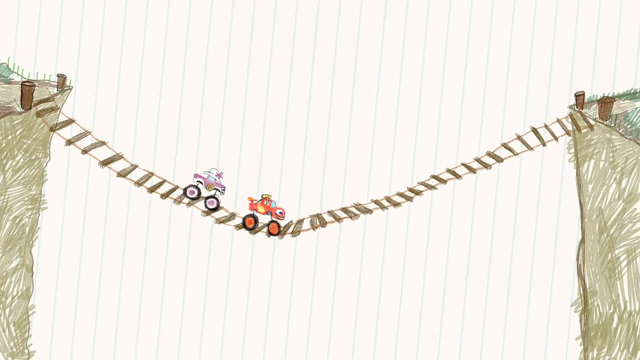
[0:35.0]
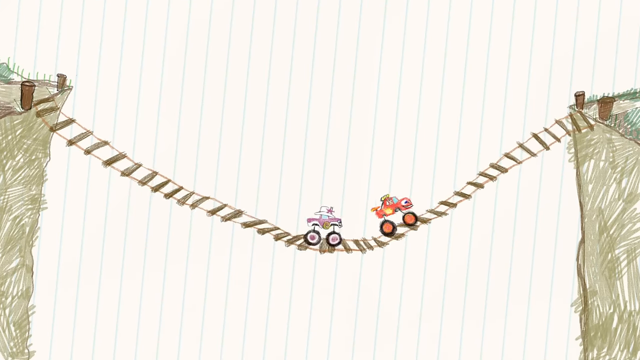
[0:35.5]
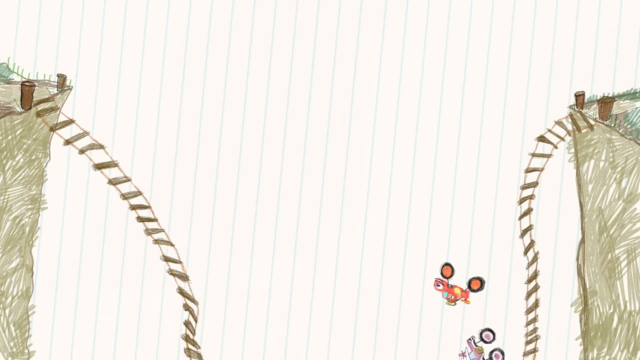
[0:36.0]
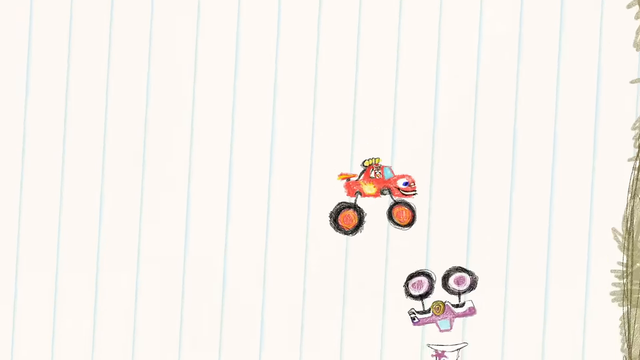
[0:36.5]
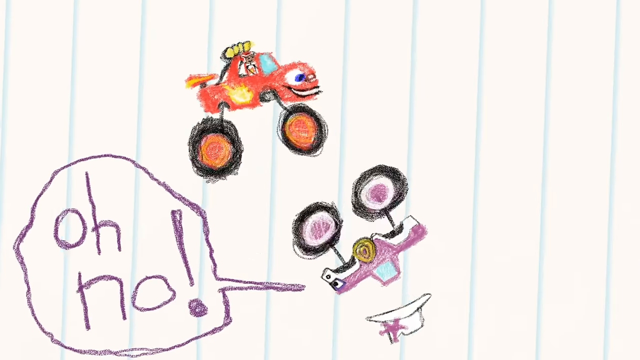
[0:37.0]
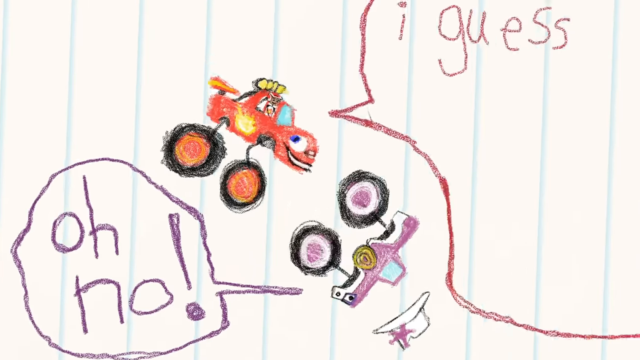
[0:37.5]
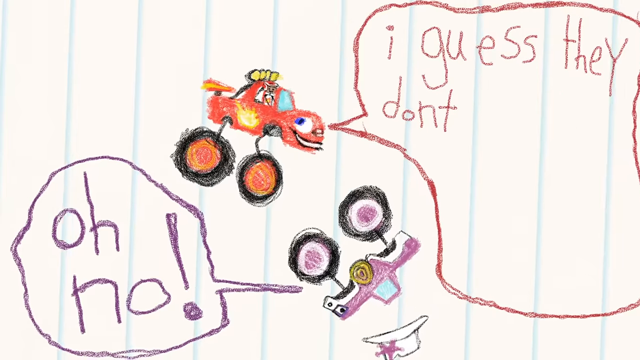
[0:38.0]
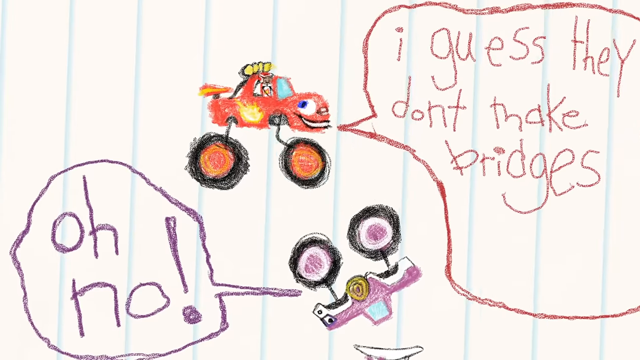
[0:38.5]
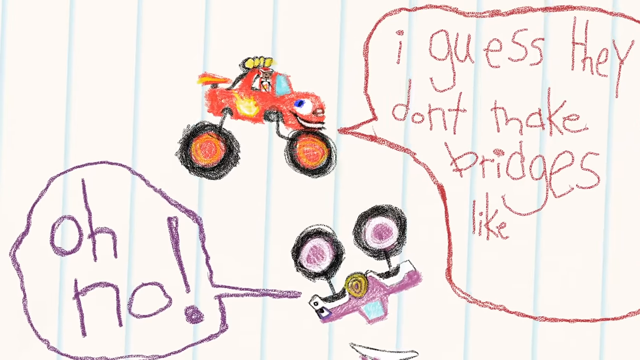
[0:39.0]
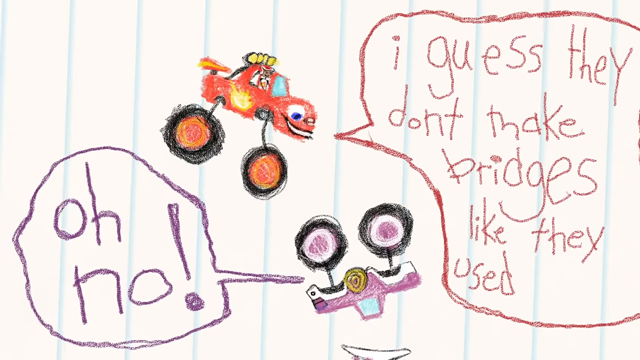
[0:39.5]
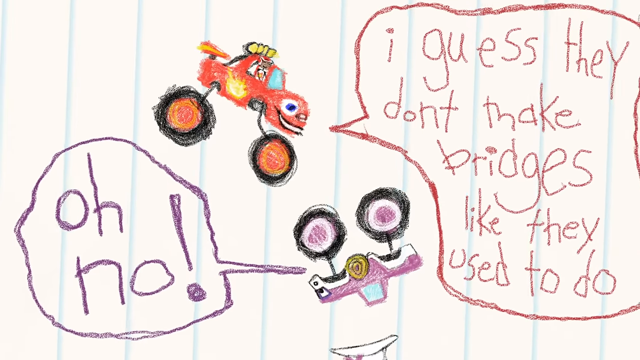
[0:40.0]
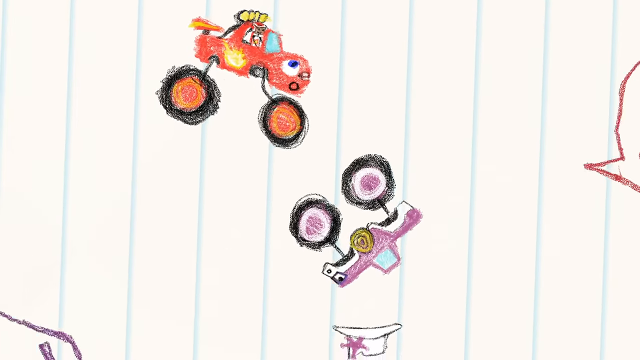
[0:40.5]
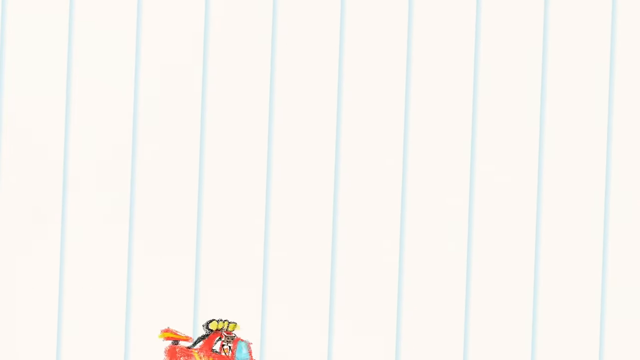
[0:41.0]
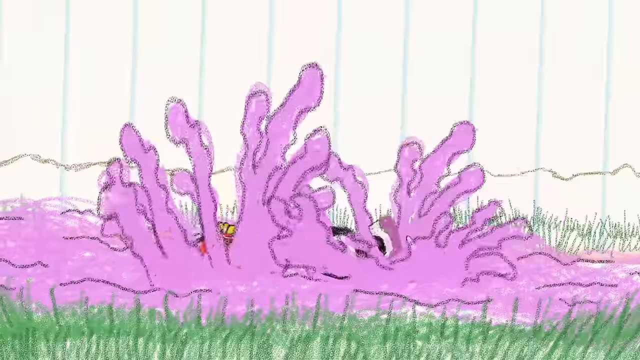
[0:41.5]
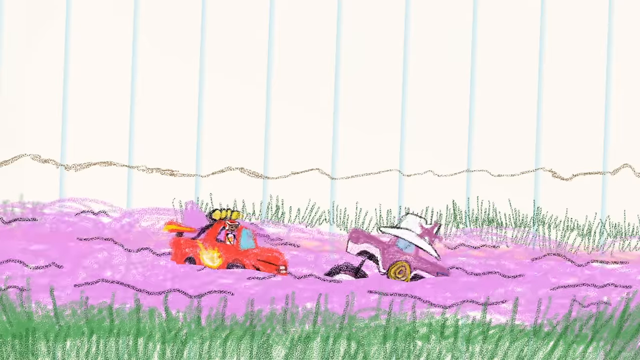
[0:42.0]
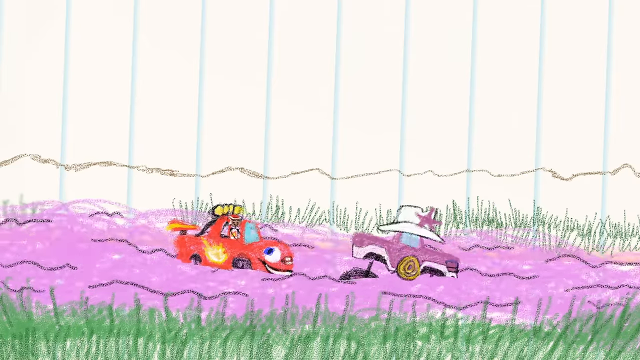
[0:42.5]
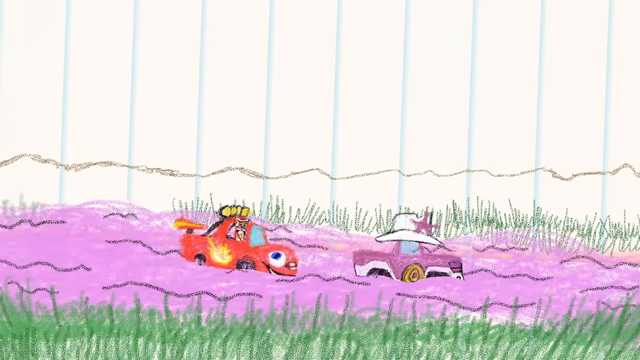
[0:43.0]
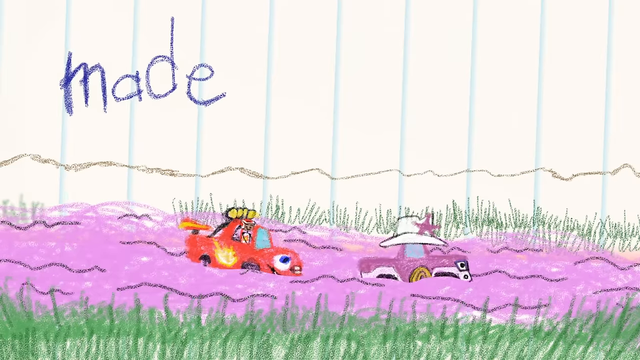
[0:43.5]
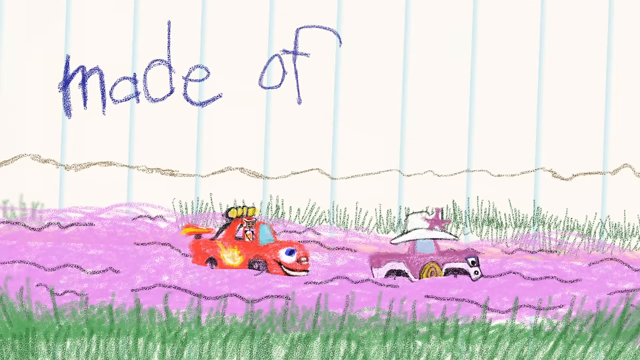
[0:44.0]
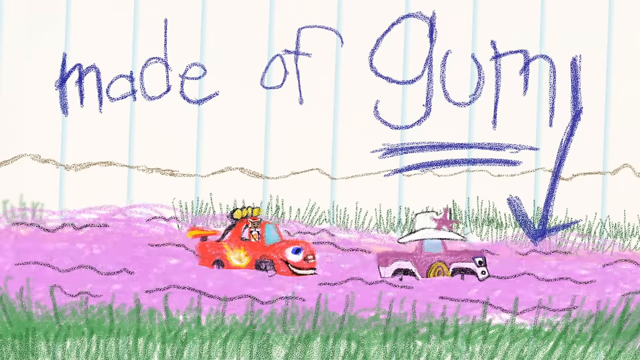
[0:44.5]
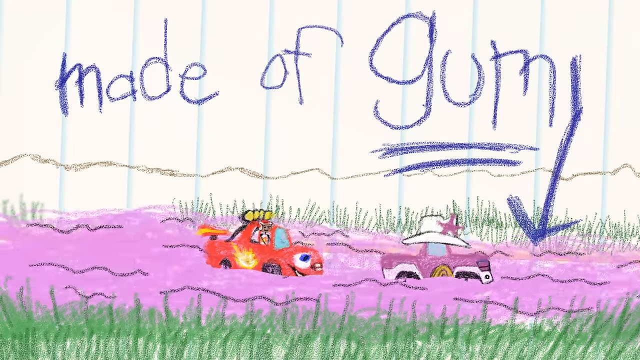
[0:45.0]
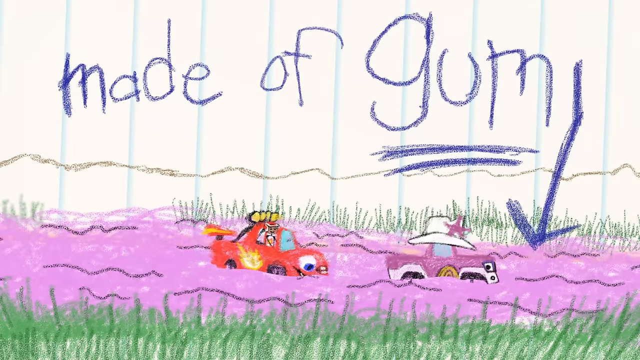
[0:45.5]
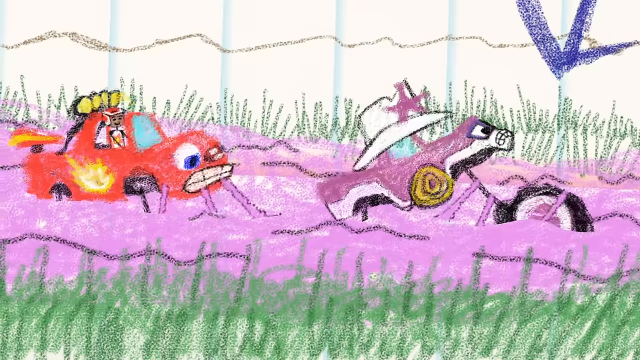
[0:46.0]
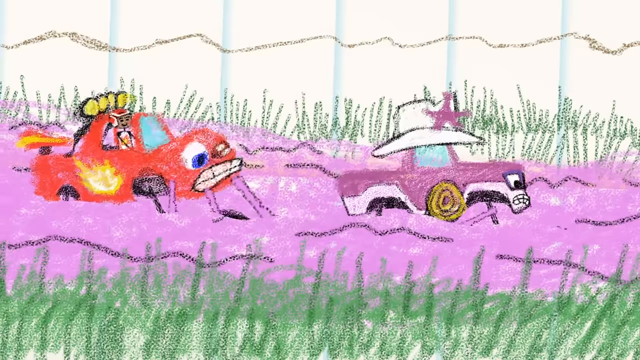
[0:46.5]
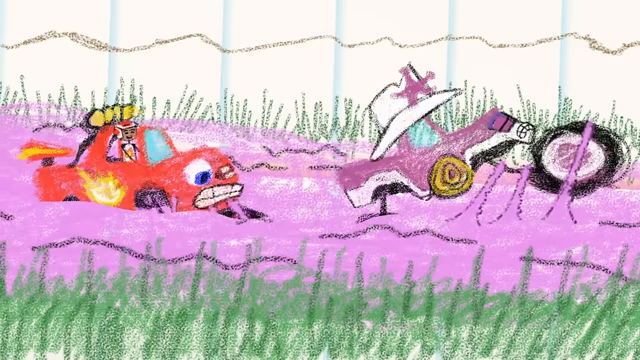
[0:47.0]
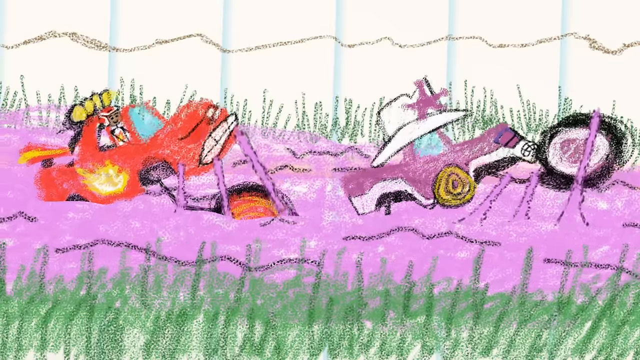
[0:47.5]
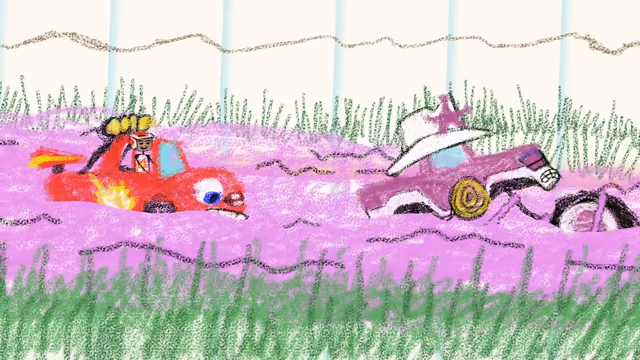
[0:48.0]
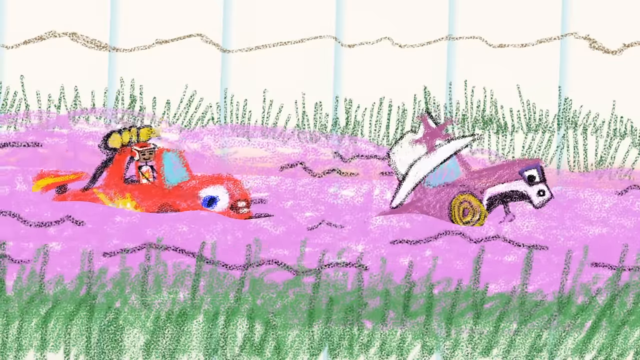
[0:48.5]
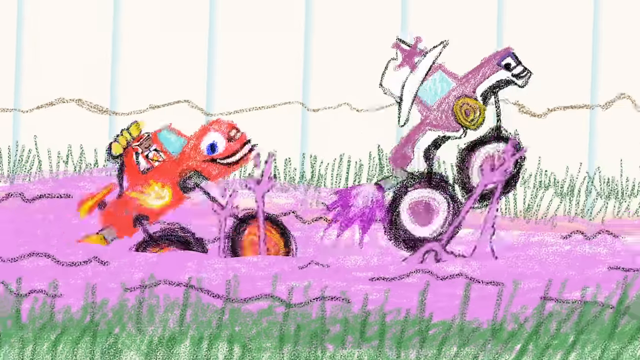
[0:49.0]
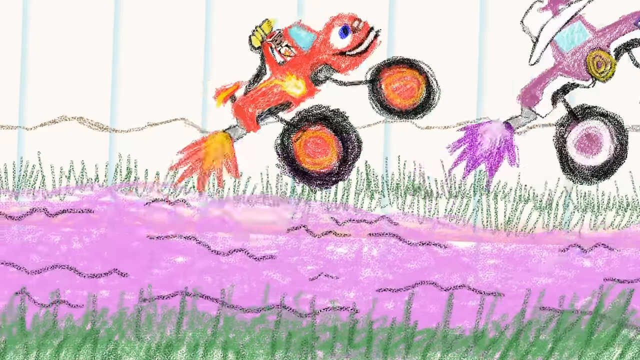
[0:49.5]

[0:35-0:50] In the middle of the bridge, the trucks try to go fast, but the bridge breaks and they fall. One says "oh no," and the other says "I guess they don't make bridges like they used to." They land in a purple river of gum and get stuck. The river of gum looks fast-moving, and text reads "made of gum" with an arrow below. Flames come out of the back ends of the trucks, which look like they are revving their engines, seemingly using a turbo or supercharge, and they break free and fly out of the river of gum.